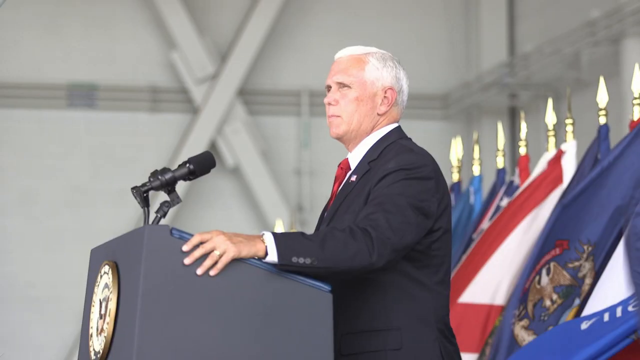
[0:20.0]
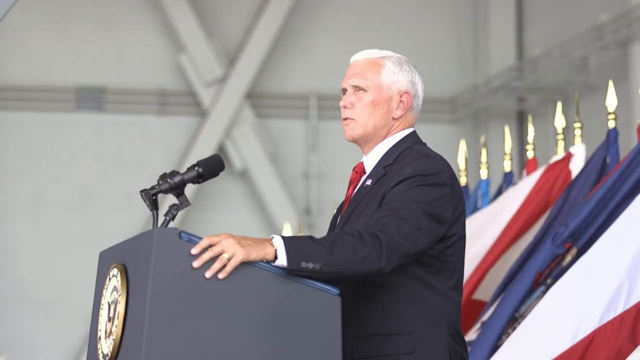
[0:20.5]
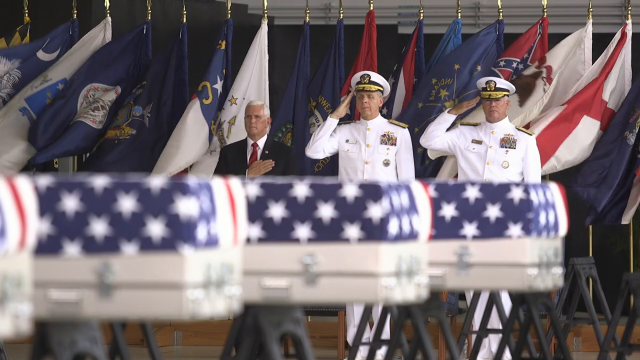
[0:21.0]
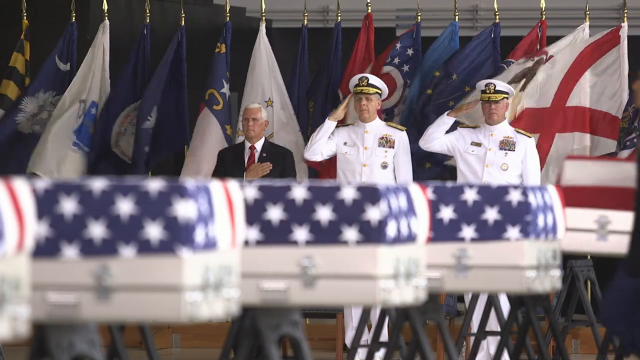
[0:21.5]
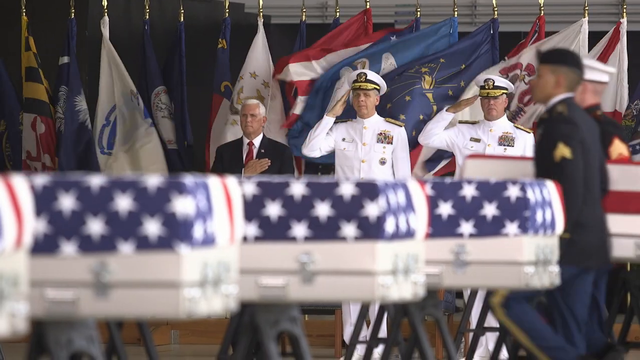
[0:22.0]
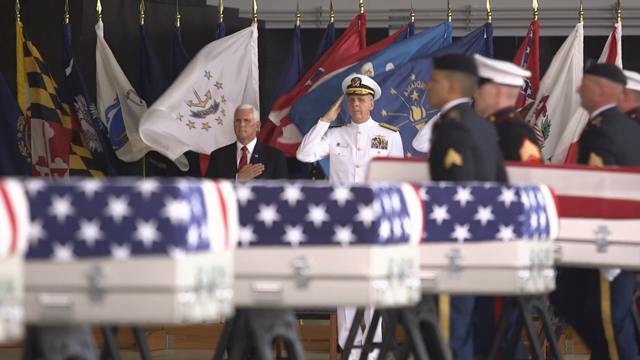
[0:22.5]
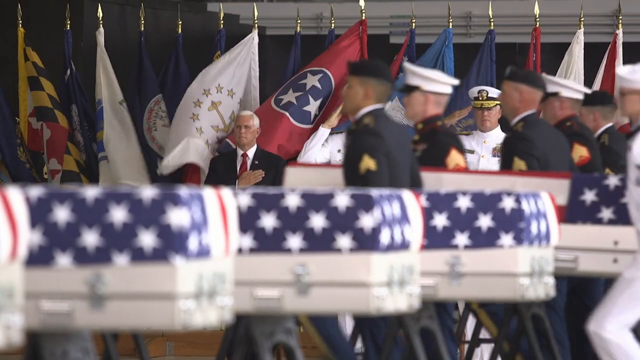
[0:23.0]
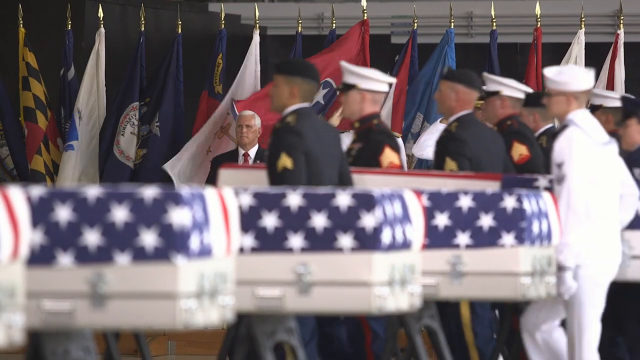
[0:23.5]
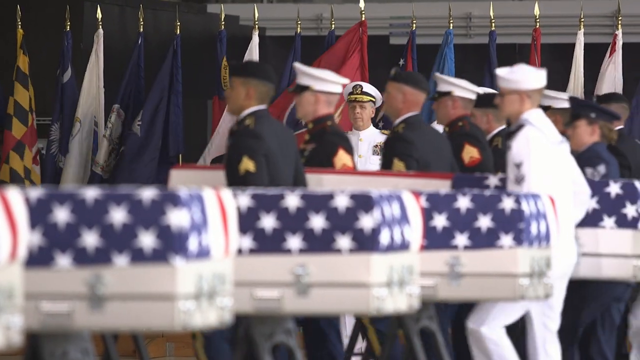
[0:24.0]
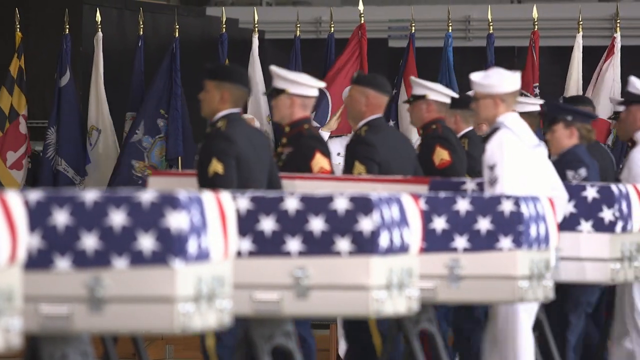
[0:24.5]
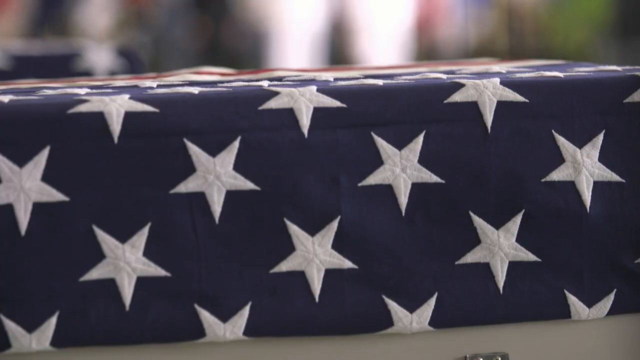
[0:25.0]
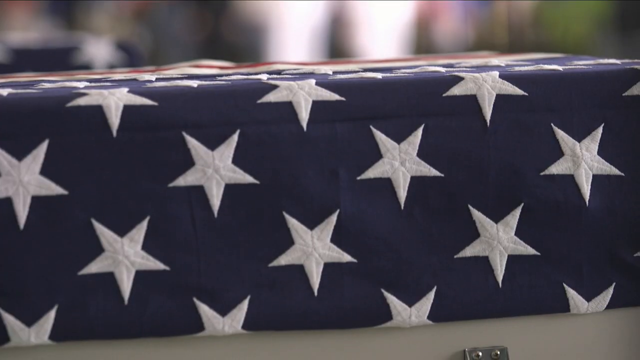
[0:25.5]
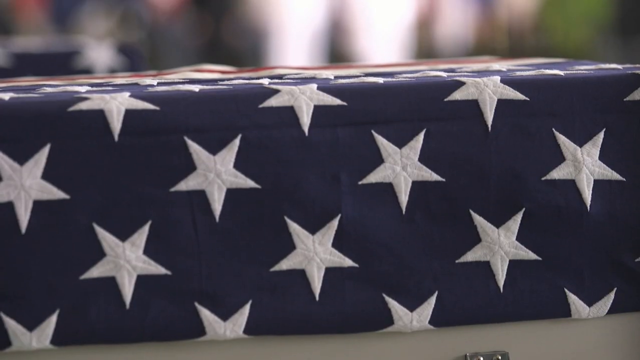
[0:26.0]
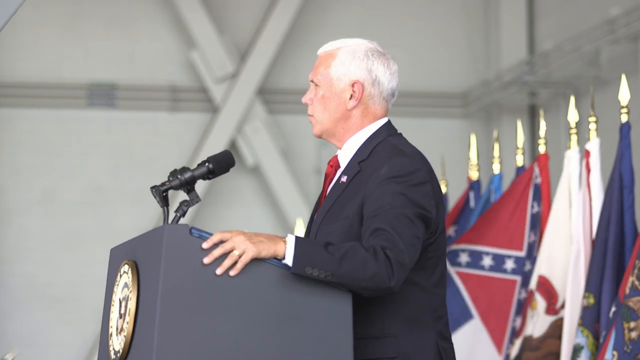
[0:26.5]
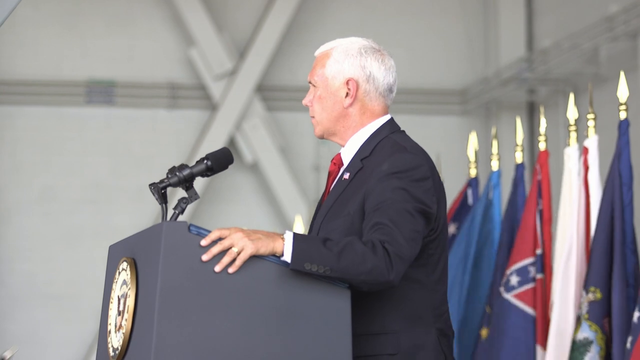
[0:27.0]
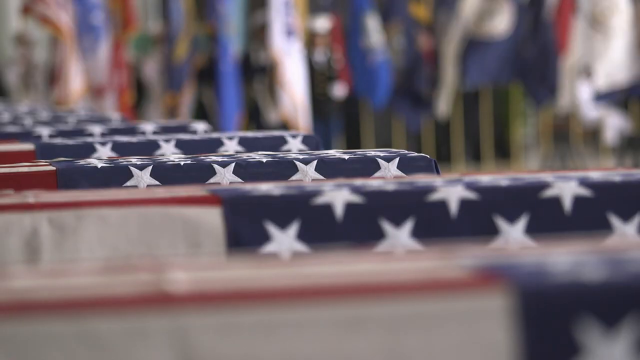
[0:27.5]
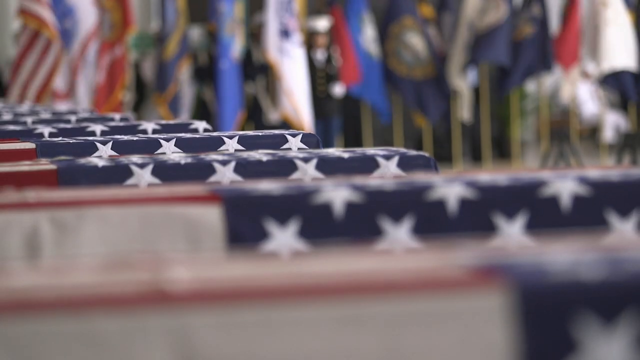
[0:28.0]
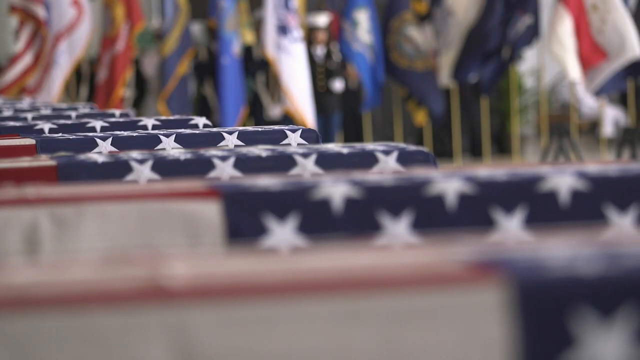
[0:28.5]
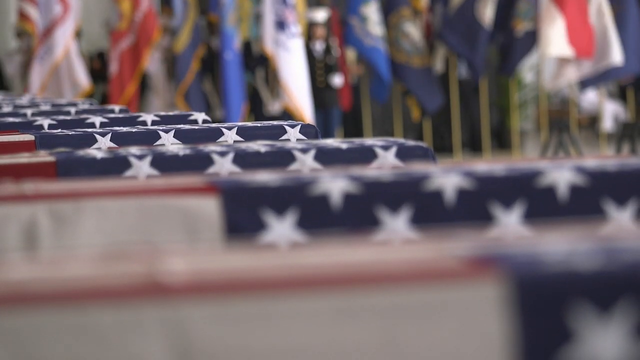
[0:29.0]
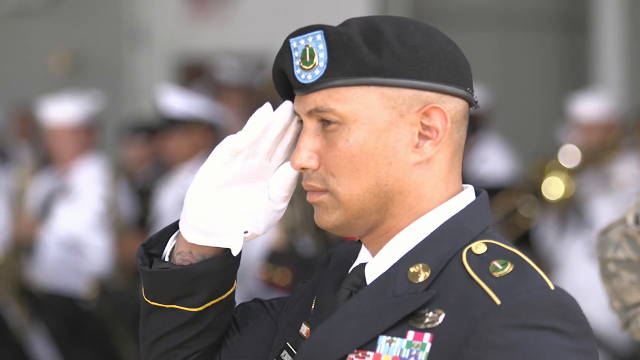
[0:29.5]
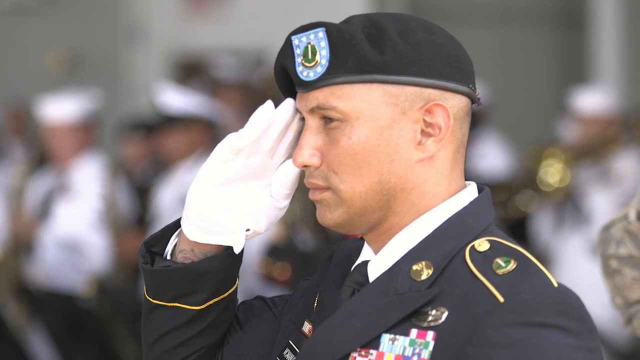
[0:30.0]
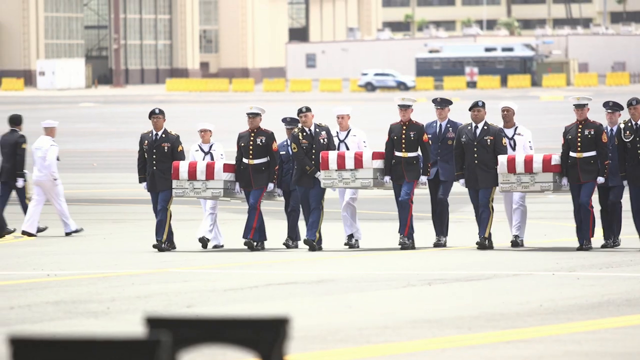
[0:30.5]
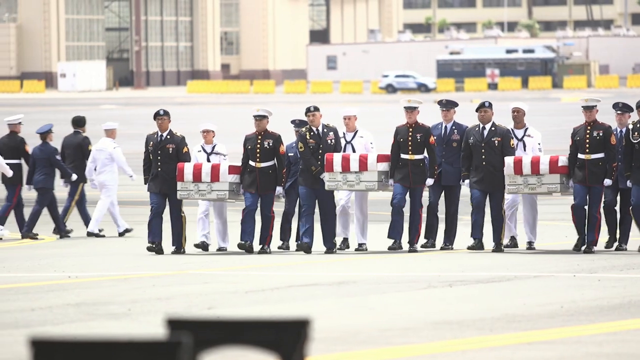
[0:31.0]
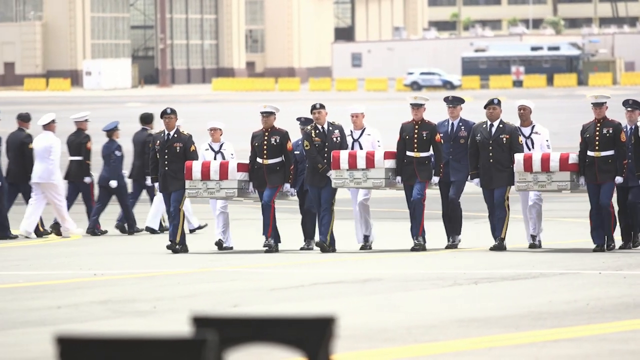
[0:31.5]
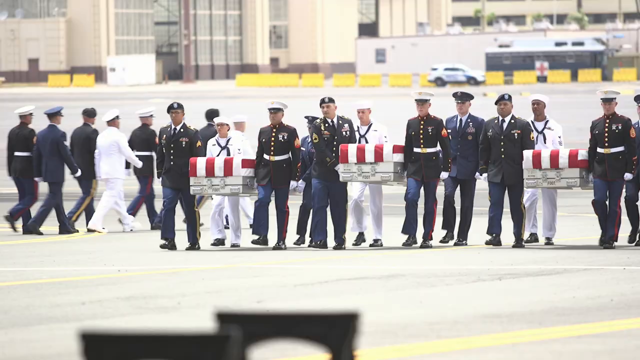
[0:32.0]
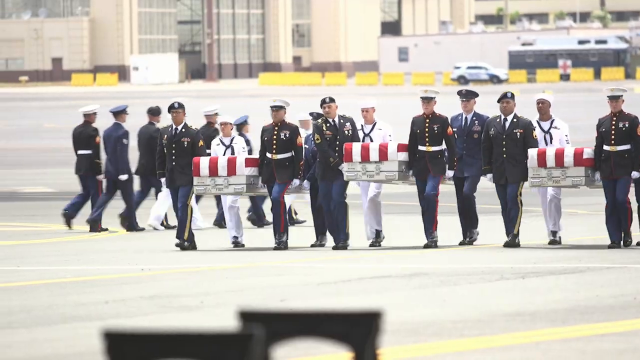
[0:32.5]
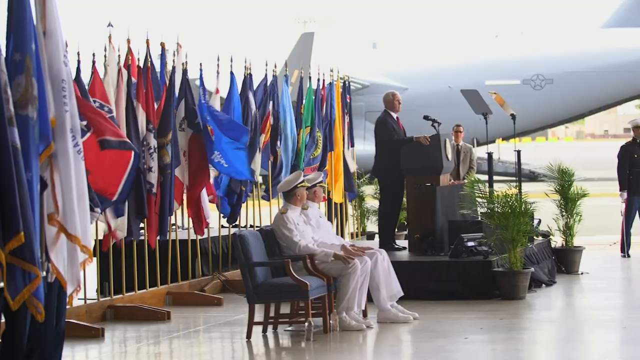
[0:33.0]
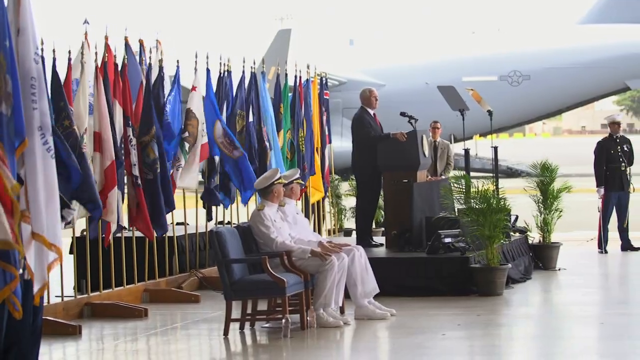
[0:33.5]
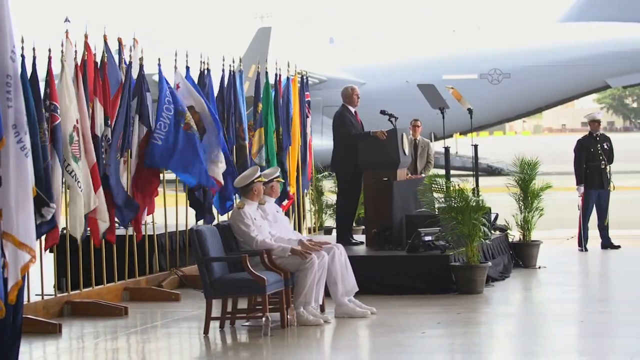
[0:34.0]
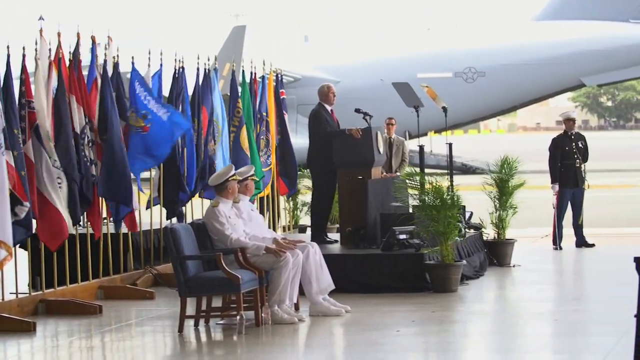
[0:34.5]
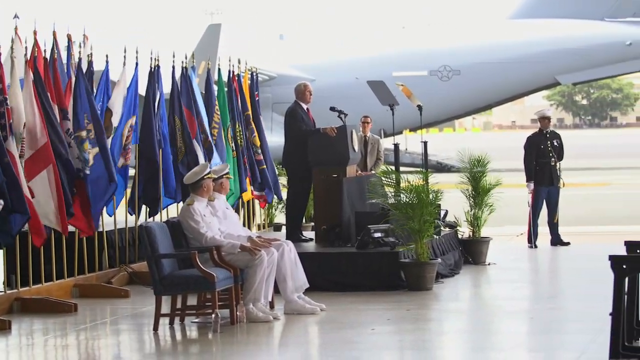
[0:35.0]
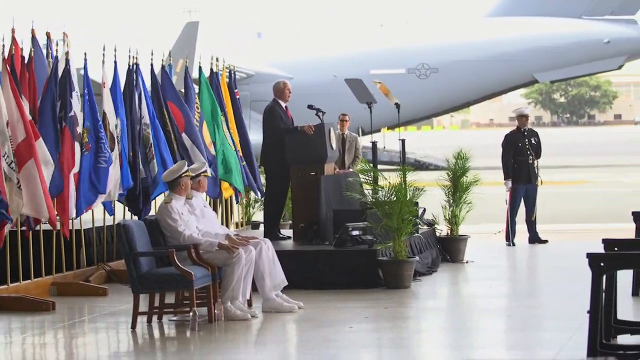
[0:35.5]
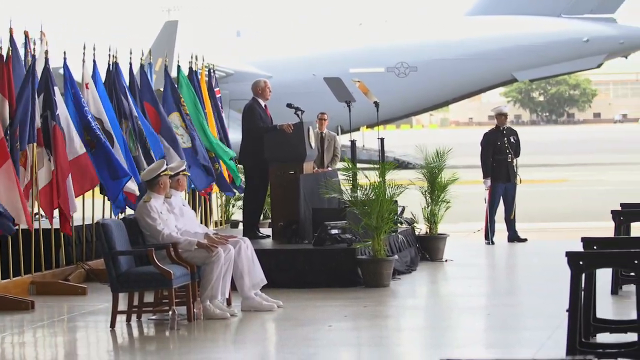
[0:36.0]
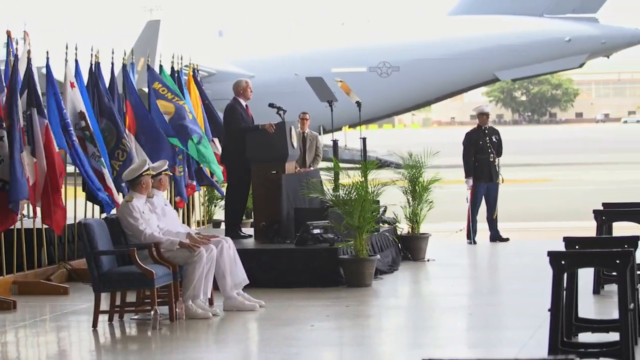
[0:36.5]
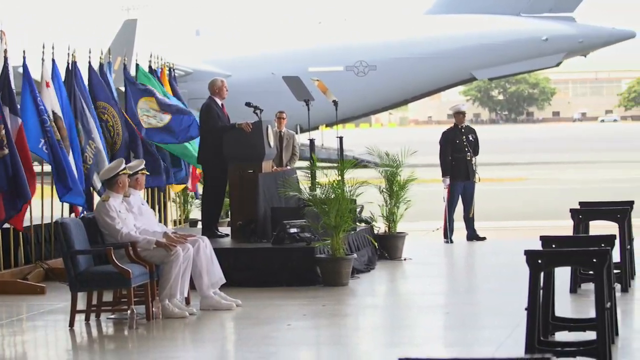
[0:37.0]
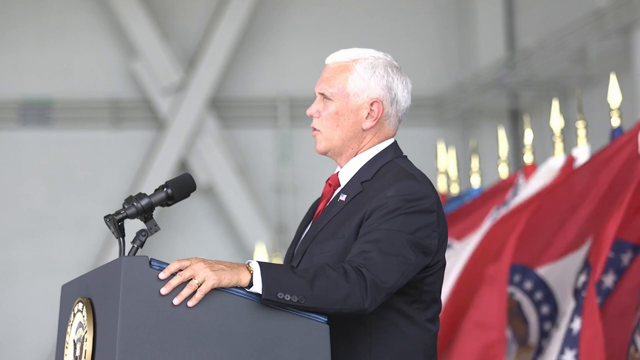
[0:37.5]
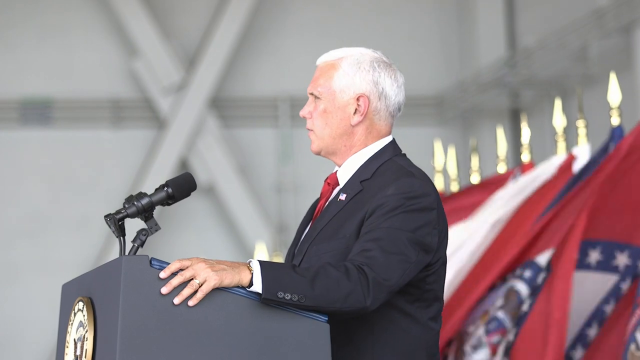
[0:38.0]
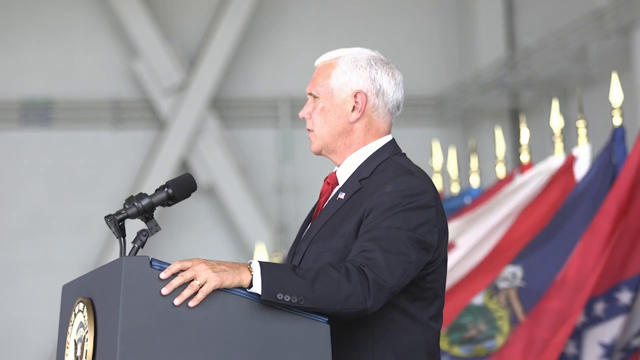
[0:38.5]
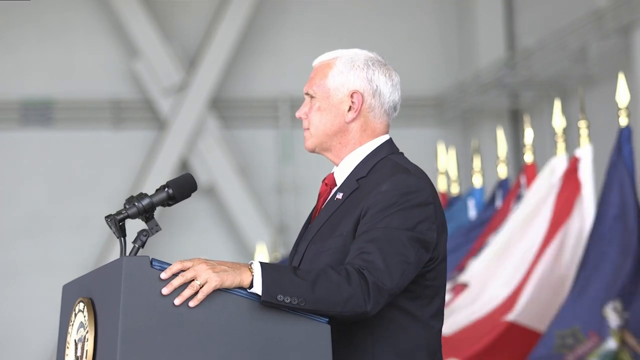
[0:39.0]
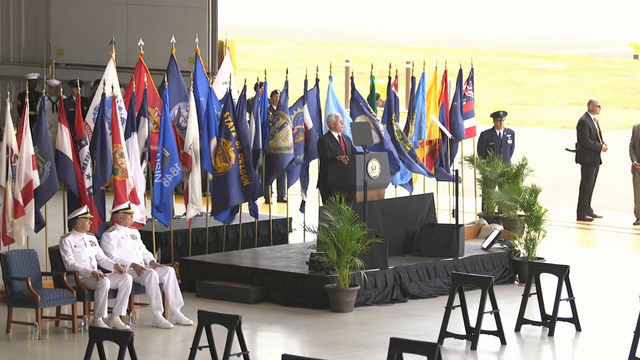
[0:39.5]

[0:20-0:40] Many military people walk and march, holding coffins. Two men in white military uniforms are seated in chairs on a stage, while two men in suits stand at the podium to the right. Behind them numerous flags of various colors are visible, and a large airplane is partially seen on the right side of the stage. Coffins come out of the airplane. A man in a white navy uniform stands in a decorated box with the American flag, surrounded by other people in navy uniforms. A man, likely the president, stands in front of everyone. The man in a suit at the podium with a microphone has white hair and wears a dark blue suit, a white shirt and a red tie; behind him are several flags, likely representing the United States of America. Several people stand and salute, and there is a closer view of a man paying tribute. American flags with stars in blue, white, red and navy blue are visible. There are chairs, with some people sitting and others standing.